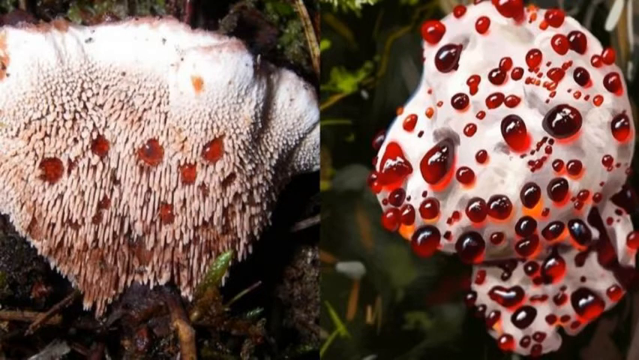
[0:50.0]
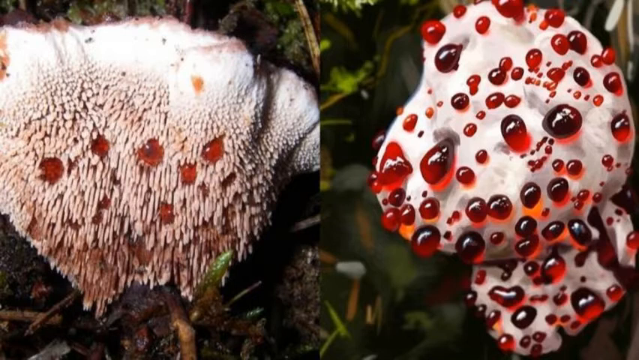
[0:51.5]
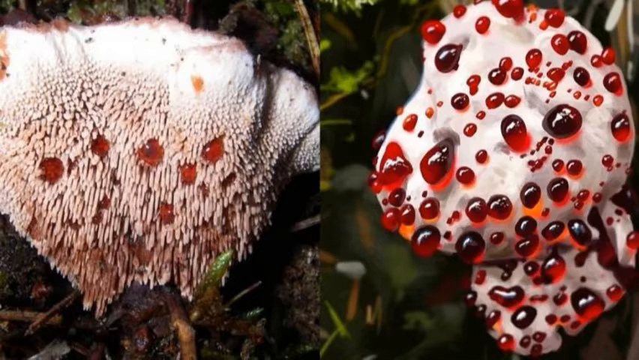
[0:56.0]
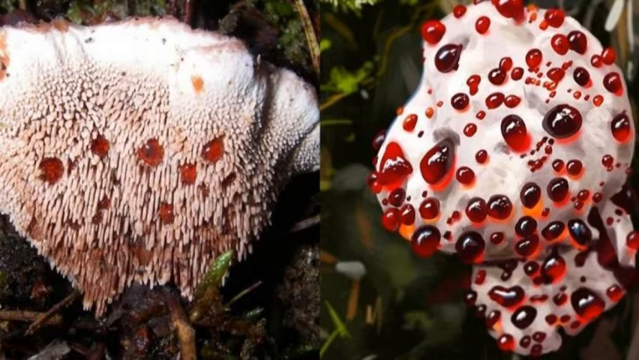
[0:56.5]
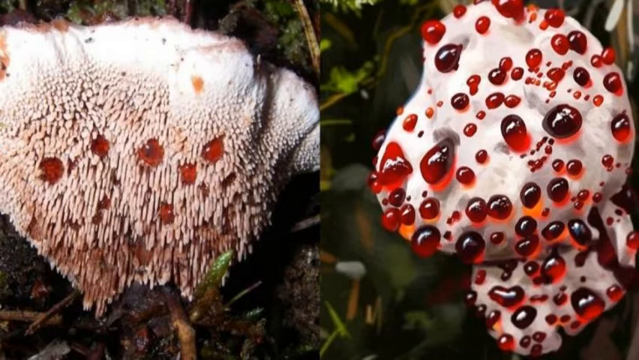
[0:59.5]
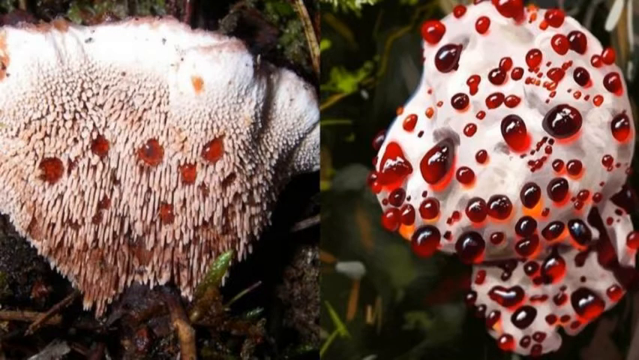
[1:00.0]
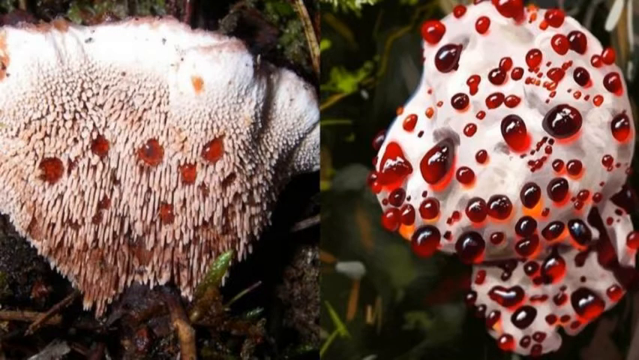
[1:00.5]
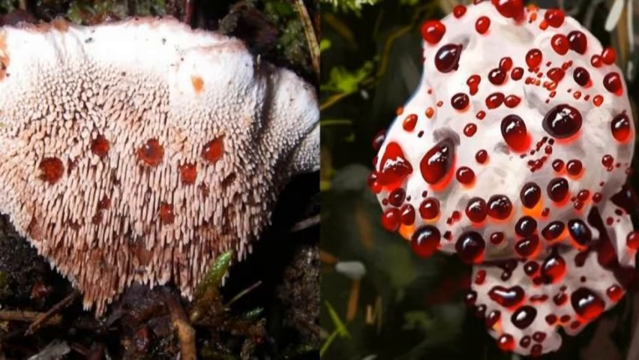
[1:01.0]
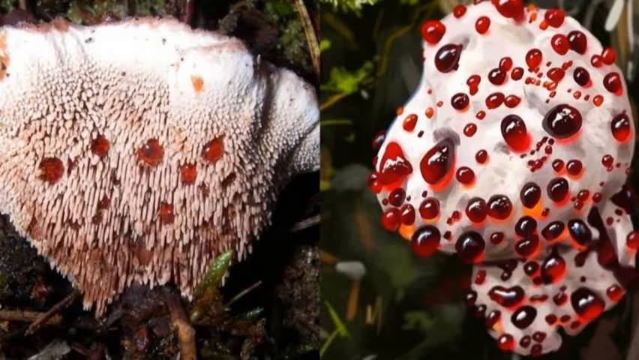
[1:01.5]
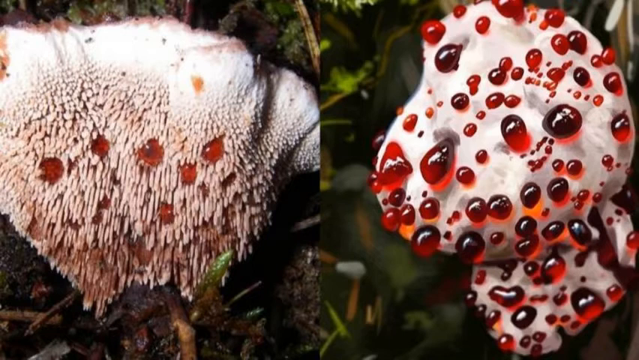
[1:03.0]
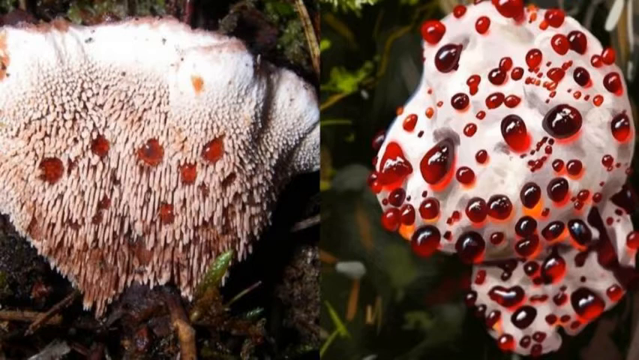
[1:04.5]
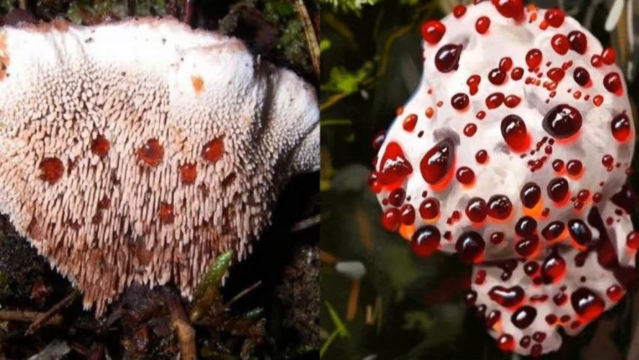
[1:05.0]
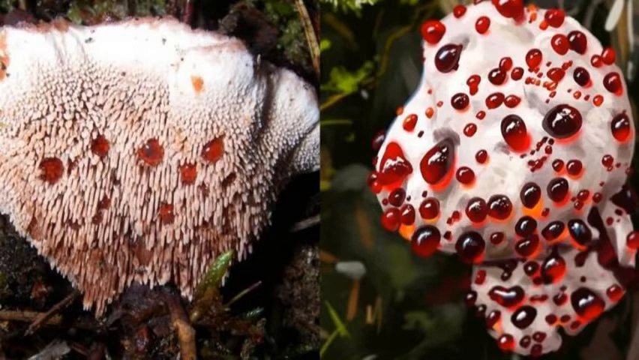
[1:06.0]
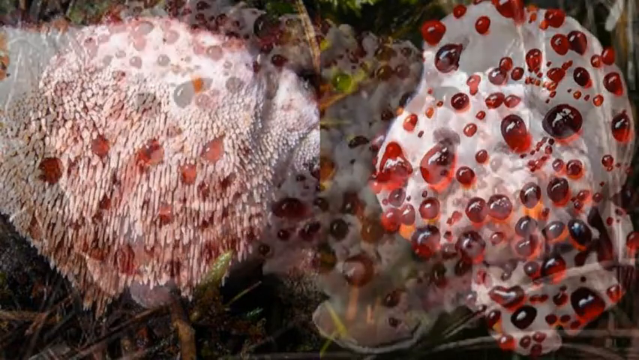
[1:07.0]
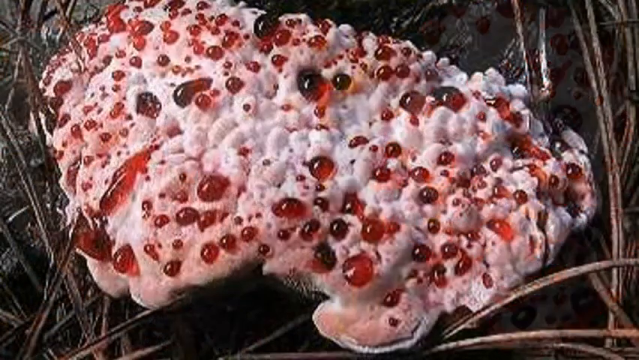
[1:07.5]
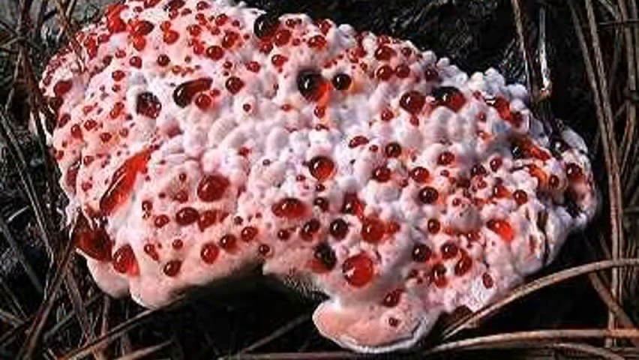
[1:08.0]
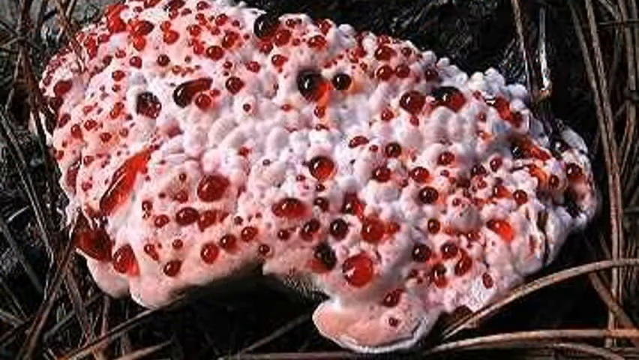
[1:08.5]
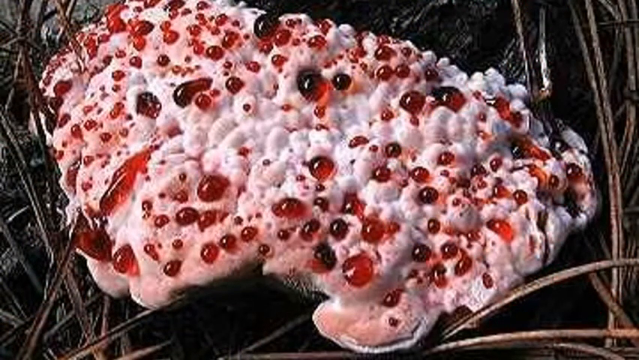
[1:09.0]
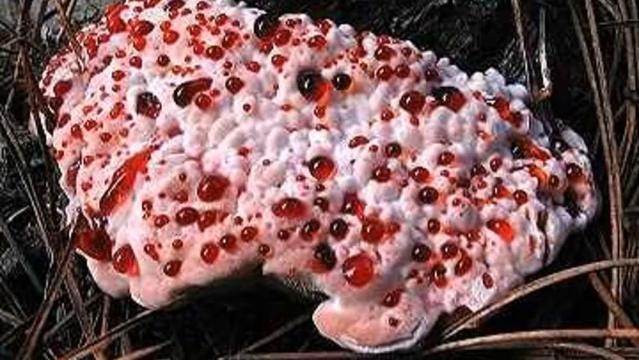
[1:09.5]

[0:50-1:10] The image of the fungus continues, and the next image shows a group of fungi growing in close proximity in the forest. They have liquid blobs attached to the flat head surface and white tentacle-like textured bristles on the lower body. The split-screen format comparing the two different-looking varieties of fungi appears again. Several twigs, leaves and other vegetation that the fungus has grown around are visible. The next image shows an extremely large, very wide fungus, possibly two individual fungi fused together. It has a large, smooth white surface and is covered in hundreds of dark red liquid blobs attached to the head.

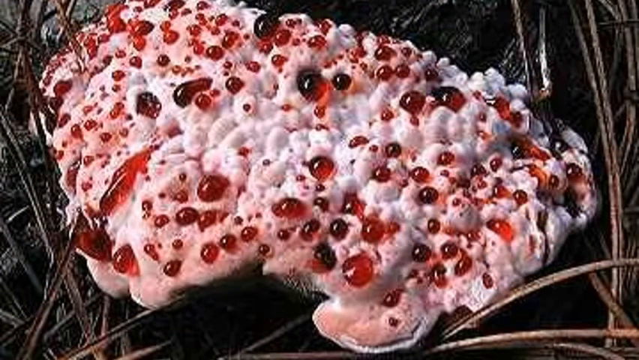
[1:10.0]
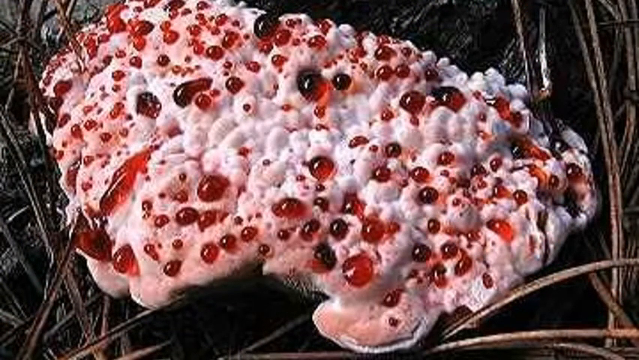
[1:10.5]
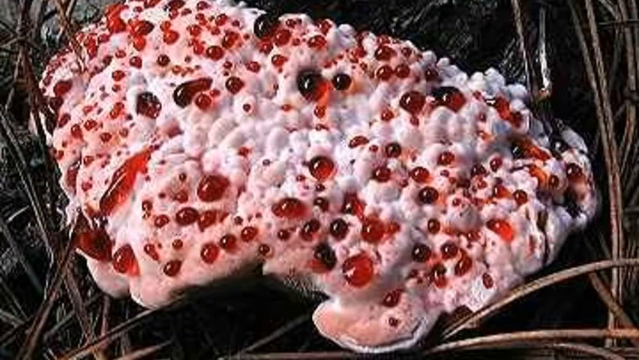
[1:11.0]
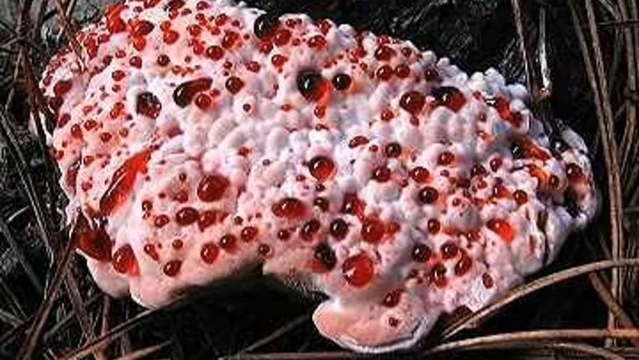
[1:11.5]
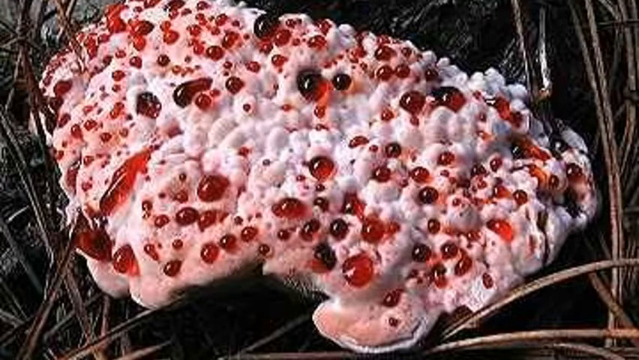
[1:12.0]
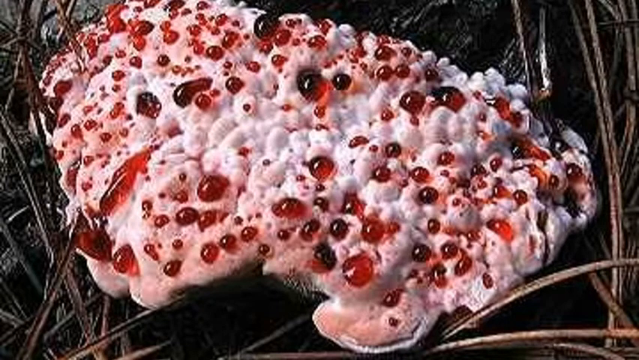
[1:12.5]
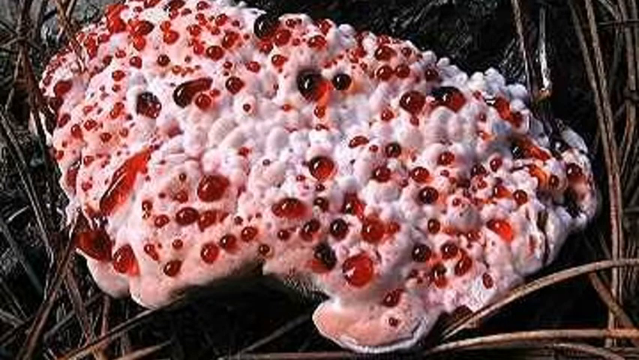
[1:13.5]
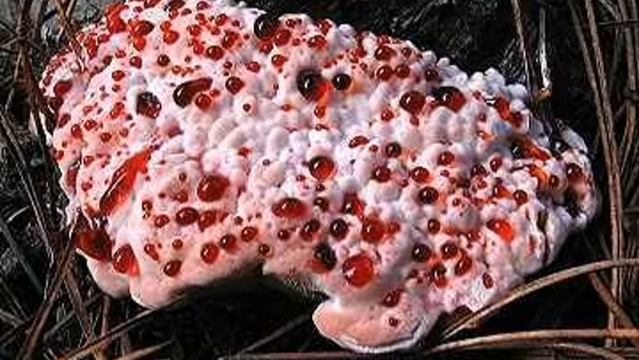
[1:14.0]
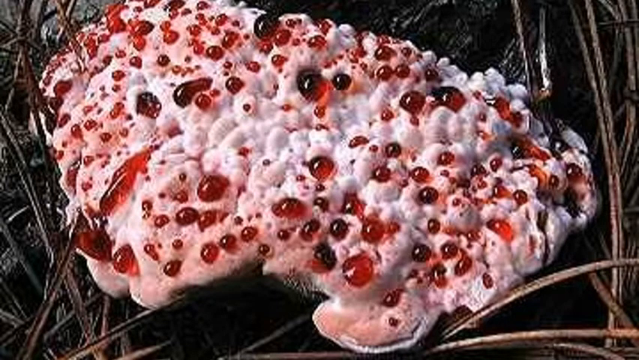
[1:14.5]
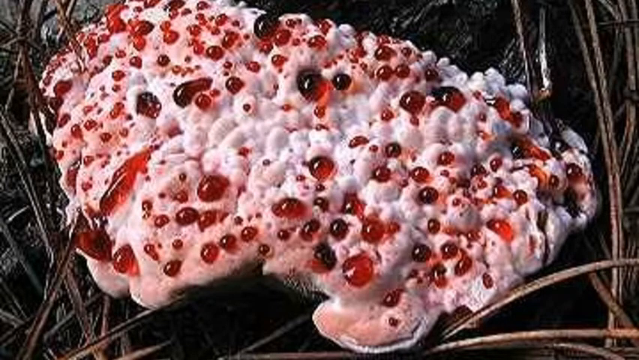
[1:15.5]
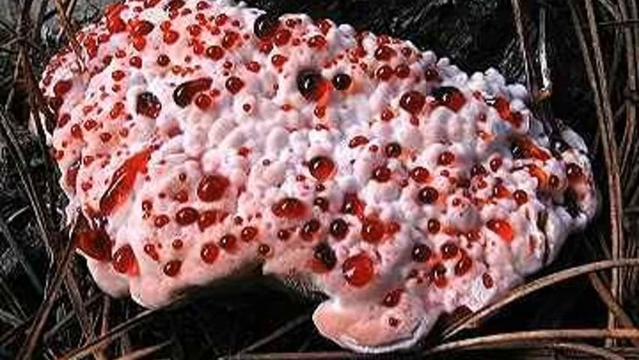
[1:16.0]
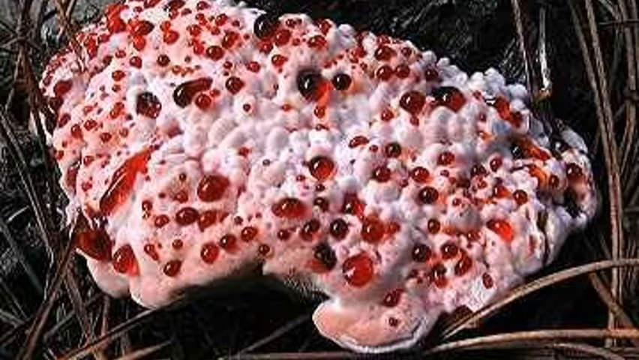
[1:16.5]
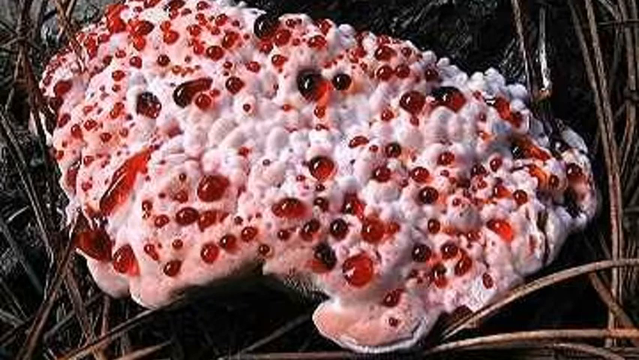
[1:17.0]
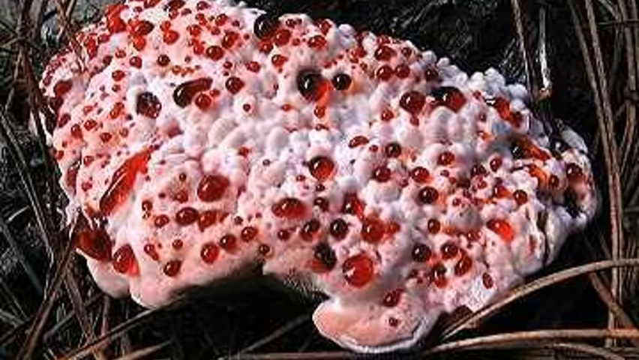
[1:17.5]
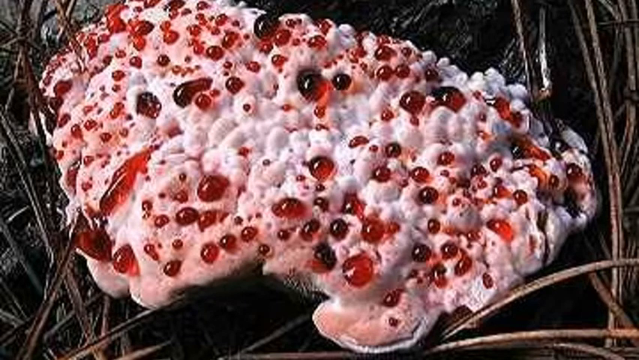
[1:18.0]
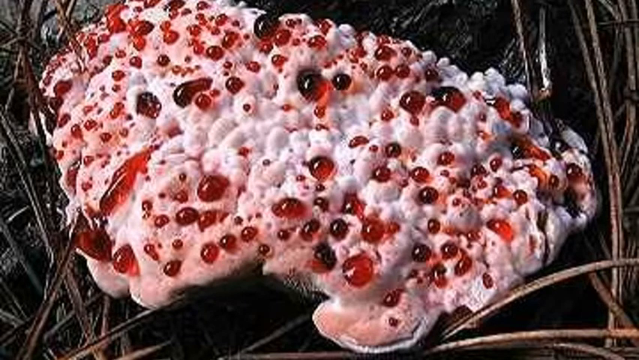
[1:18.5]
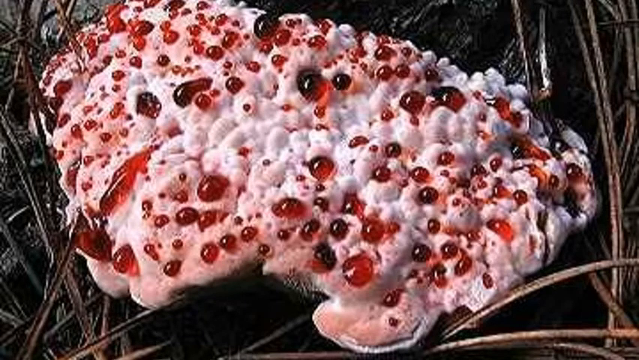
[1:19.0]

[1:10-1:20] Various images of the fungus show how they vary slightly in texture, shape and size. All of them have dark red liquid blobs attached to the surface, although some appear to have more attached than others. All grow in a forest setting with trees, twigs and other forest vegetation around them. The image of the extra-large fungus, which could possibly be two smaller fungi fused together to appear as one, appears again, covered in thousands of red liquid blobs. The blobs differ in shade: some are a deep, dark red and others a lighter red. The larger fungus appears to have some bubbling on its top white surface, where the red blobs are attached.